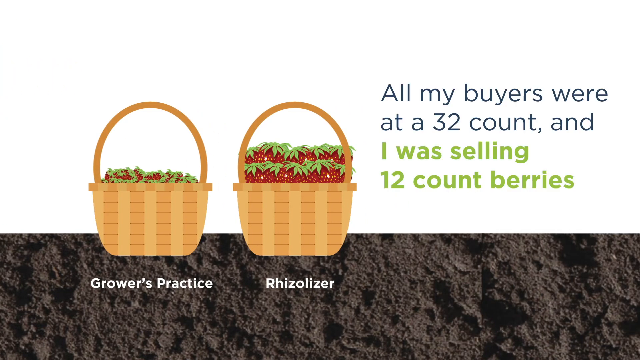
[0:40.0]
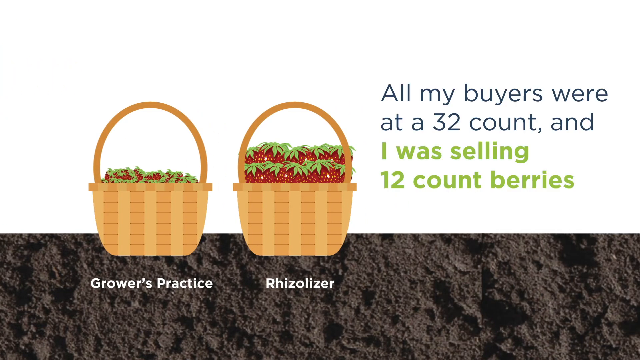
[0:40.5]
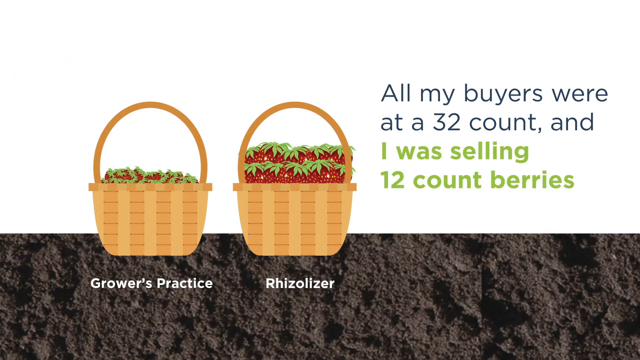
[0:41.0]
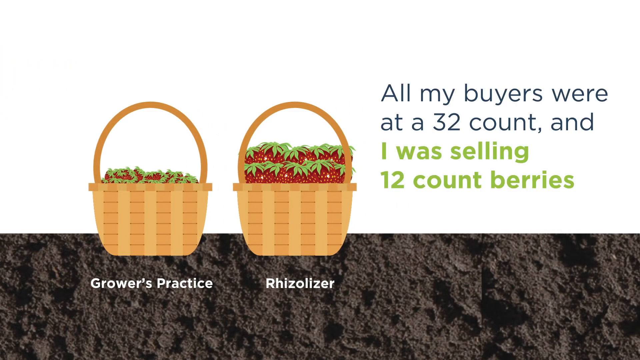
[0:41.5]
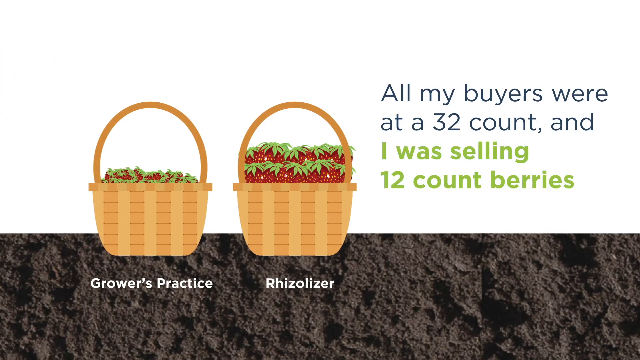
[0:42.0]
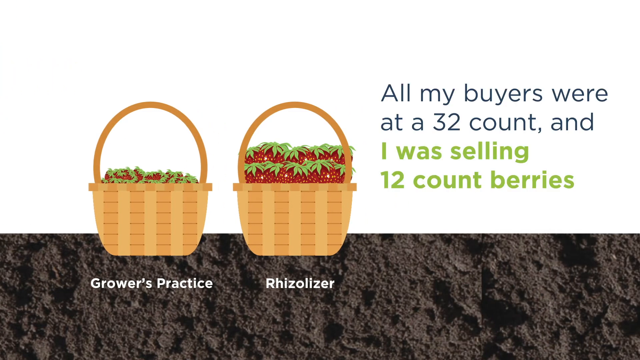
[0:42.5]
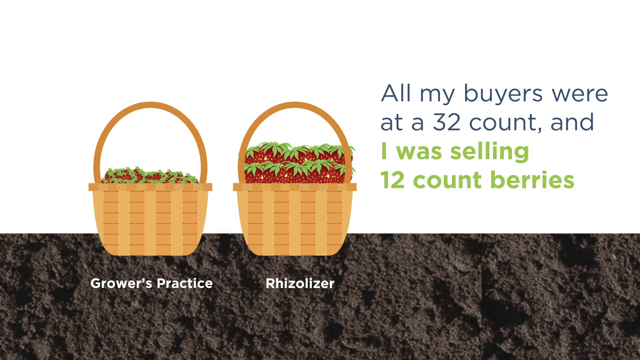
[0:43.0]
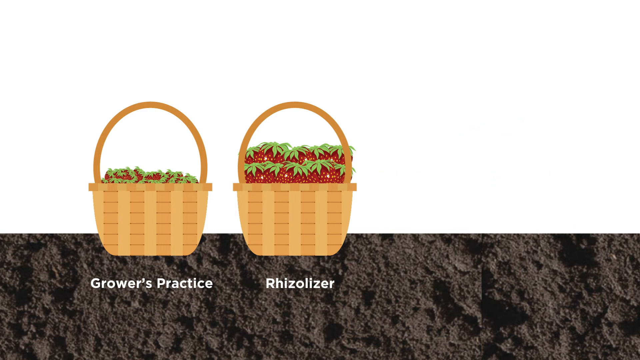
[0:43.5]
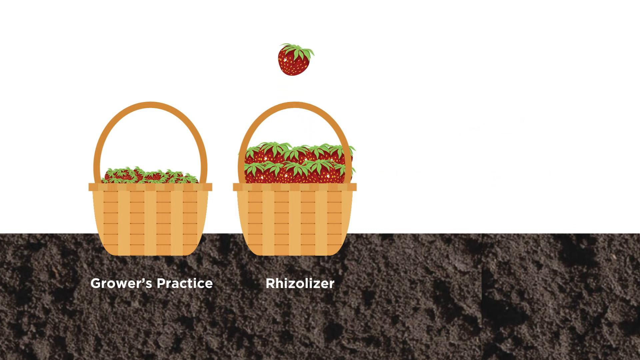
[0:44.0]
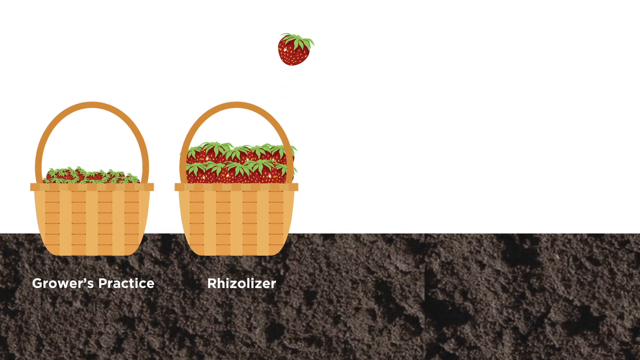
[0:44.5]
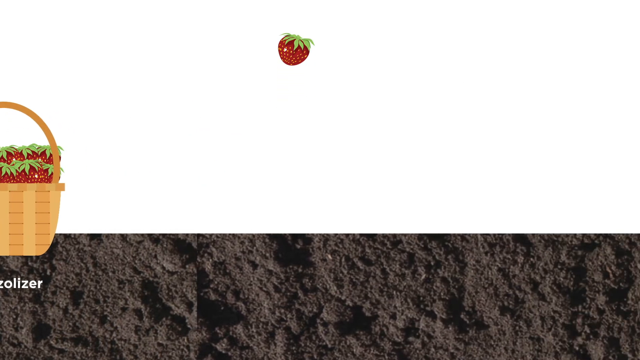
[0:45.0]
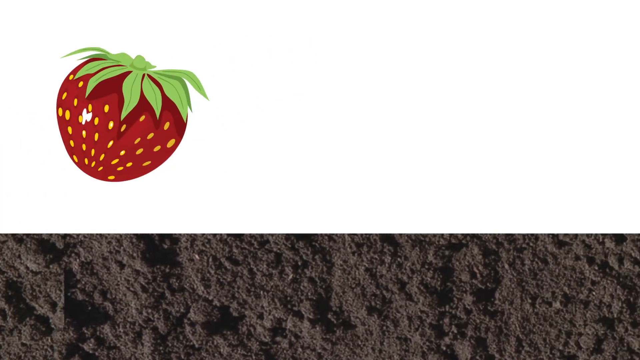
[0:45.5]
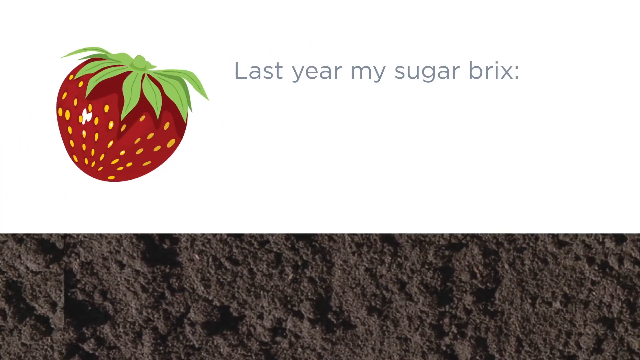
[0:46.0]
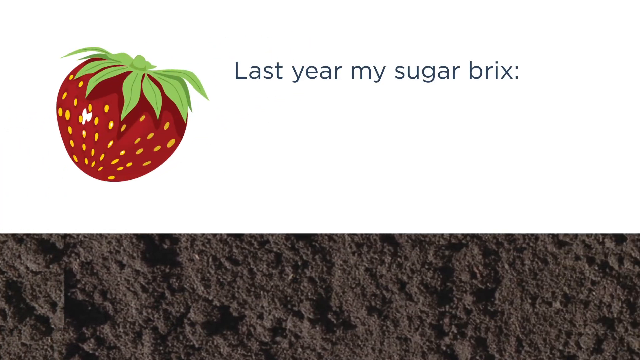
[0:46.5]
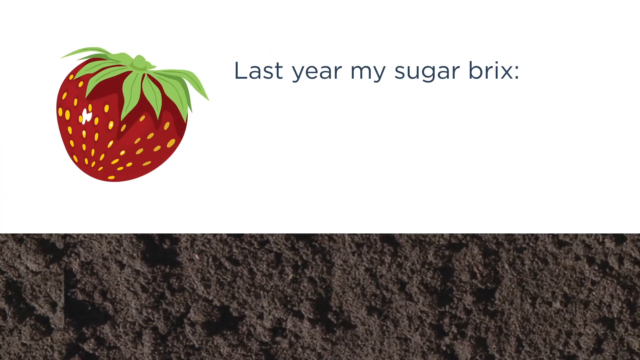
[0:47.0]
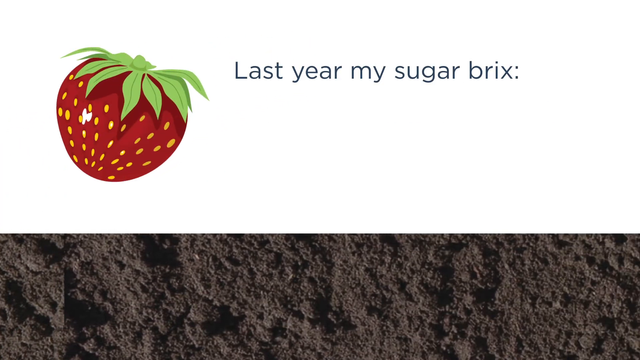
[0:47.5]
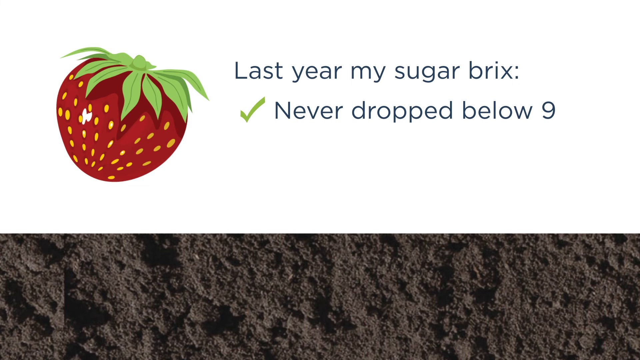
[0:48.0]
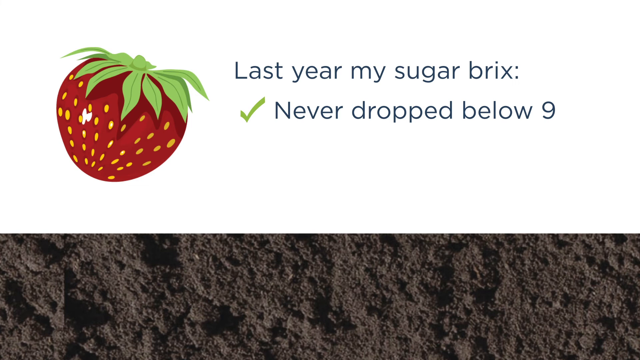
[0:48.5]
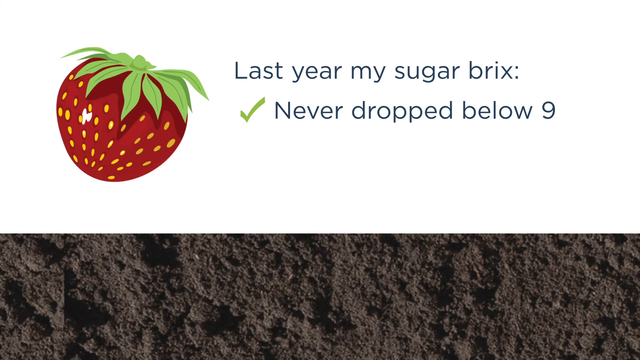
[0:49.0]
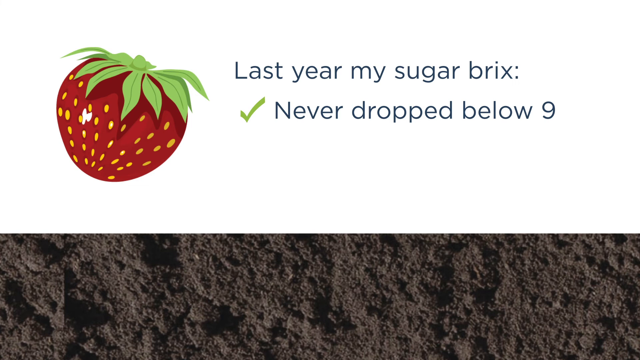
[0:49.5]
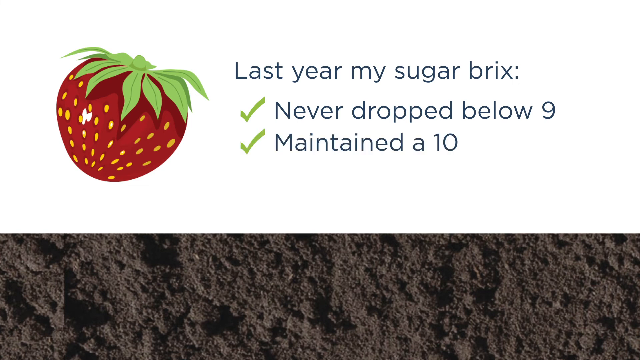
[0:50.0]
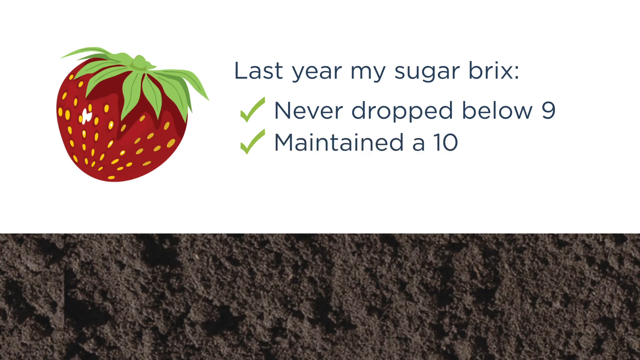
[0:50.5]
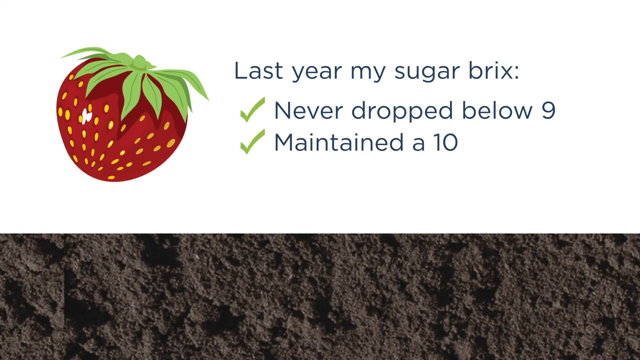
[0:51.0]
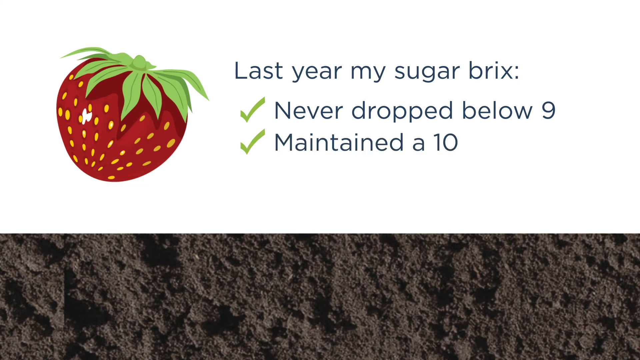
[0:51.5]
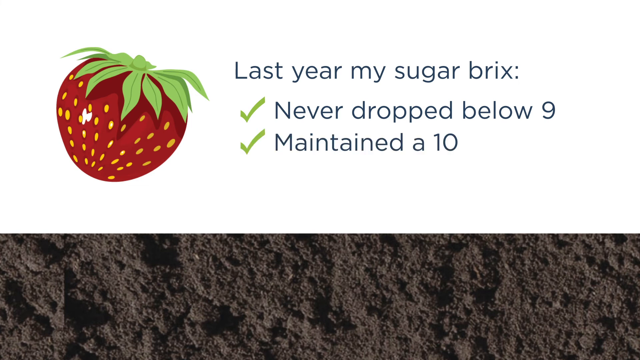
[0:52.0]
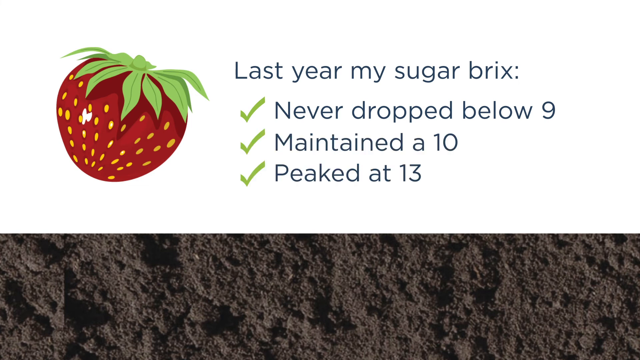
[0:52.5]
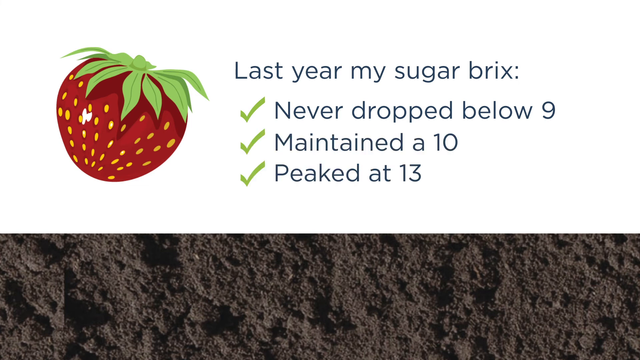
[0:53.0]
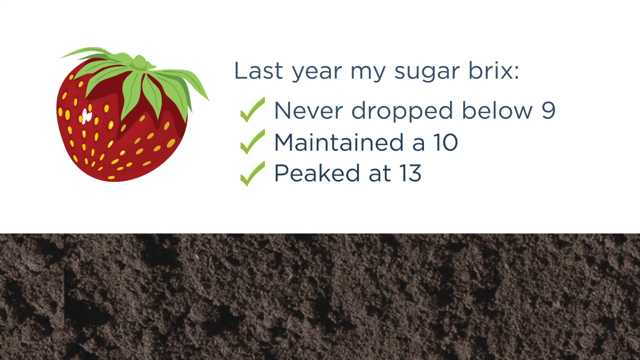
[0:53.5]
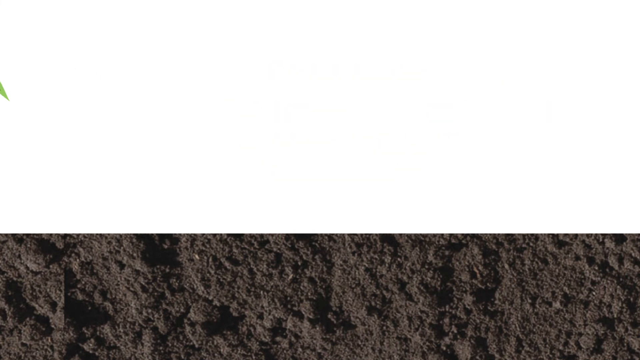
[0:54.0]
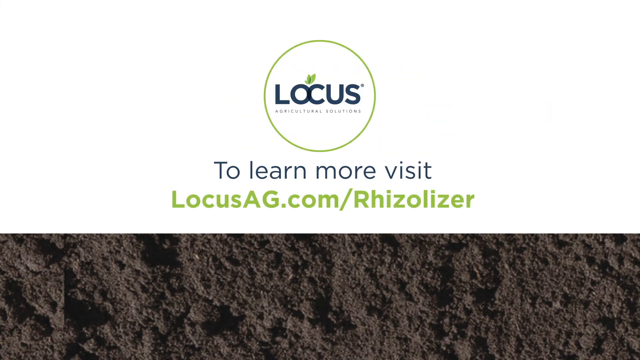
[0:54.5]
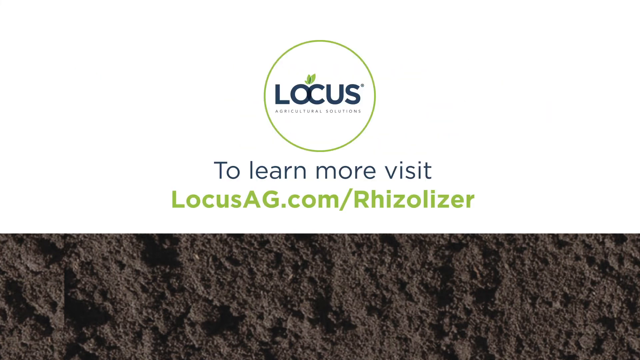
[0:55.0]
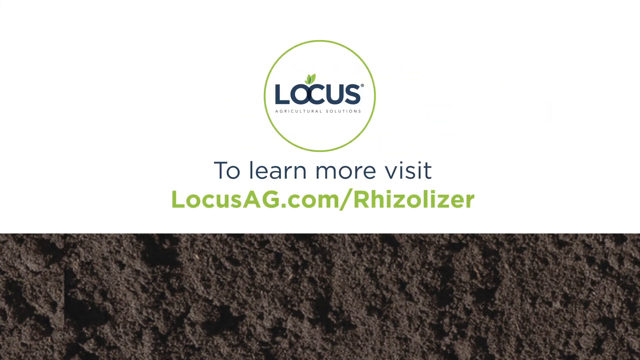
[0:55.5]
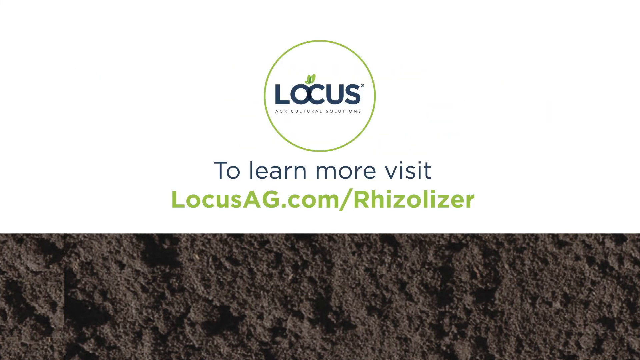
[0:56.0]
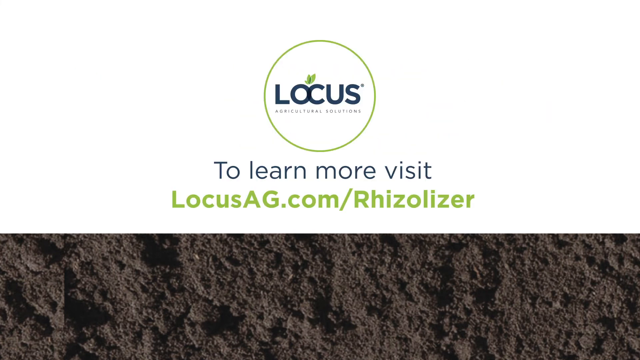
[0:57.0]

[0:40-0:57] A single berry leaves the Rhizolizer basket, floats over, and gets enlarged. The vector art of the berry, a strawberry or raspberry, is highly detailed, with its surface clearly visible. Text appears to its right reading "last year my sugar bricks," followed by lines that each start with a green check mark: "never dropped below nine," "maintained a 10," and "peaked at 13." The ending credits show the Locus Agricultural Solutions logo along with the URL "locusag.com/rhizolizer." The background is two-toned: the top half is white and the bottom half is gray, mimicking soil, with a surface that looks quite rough.